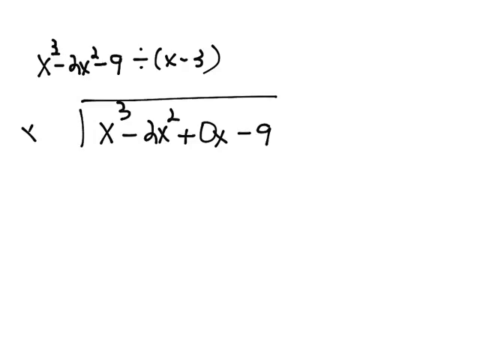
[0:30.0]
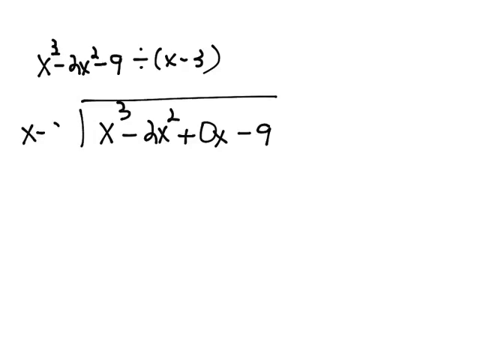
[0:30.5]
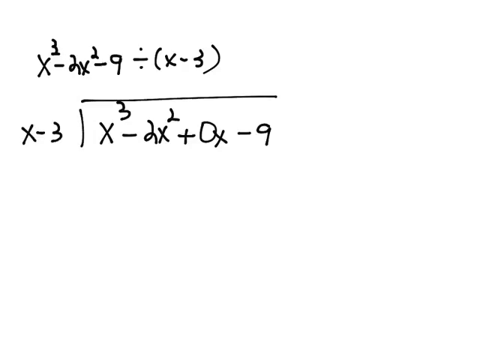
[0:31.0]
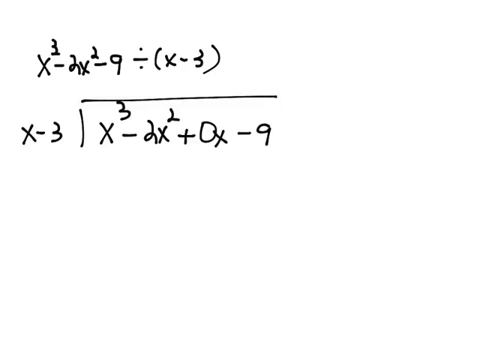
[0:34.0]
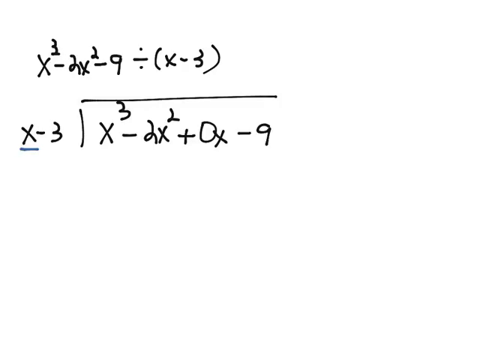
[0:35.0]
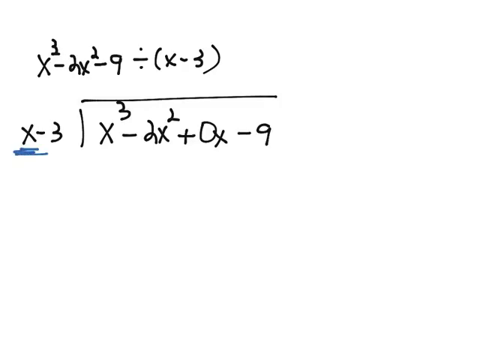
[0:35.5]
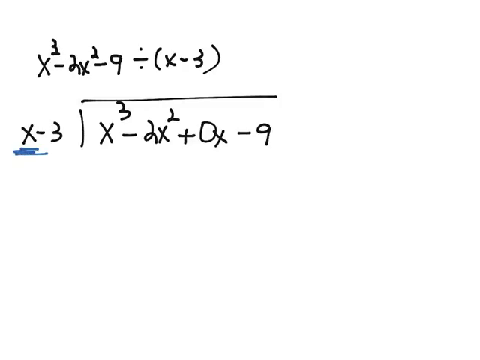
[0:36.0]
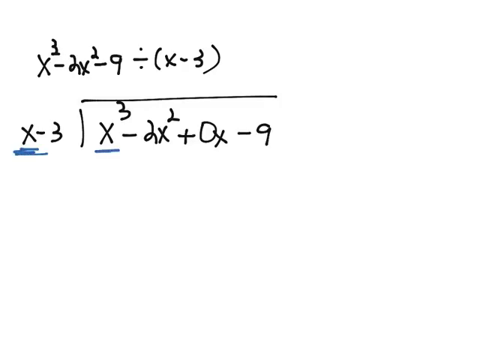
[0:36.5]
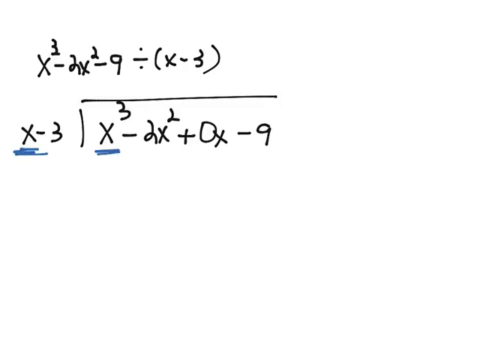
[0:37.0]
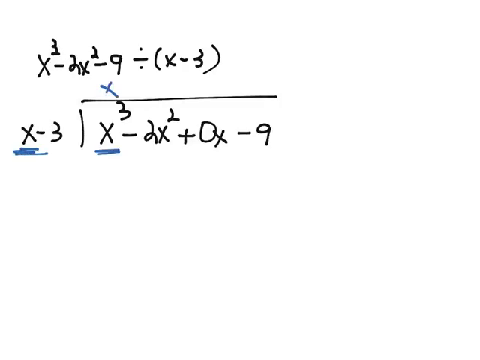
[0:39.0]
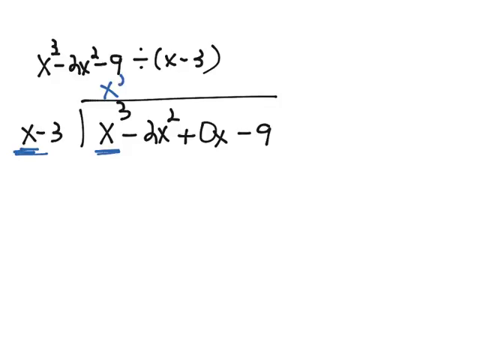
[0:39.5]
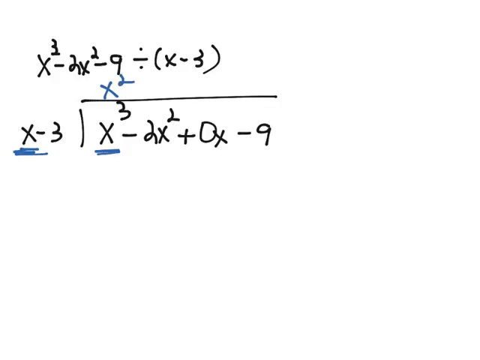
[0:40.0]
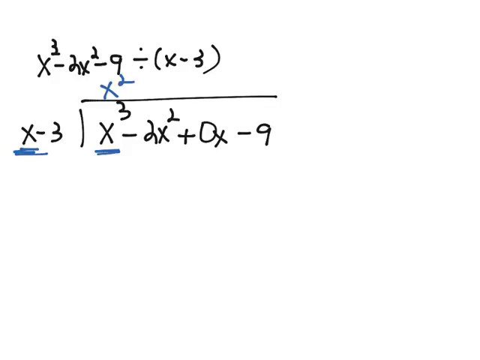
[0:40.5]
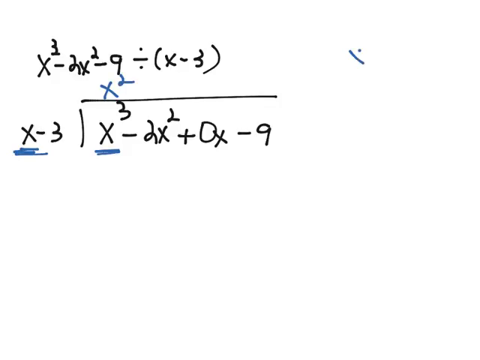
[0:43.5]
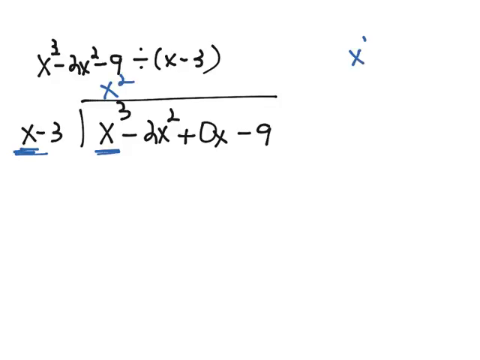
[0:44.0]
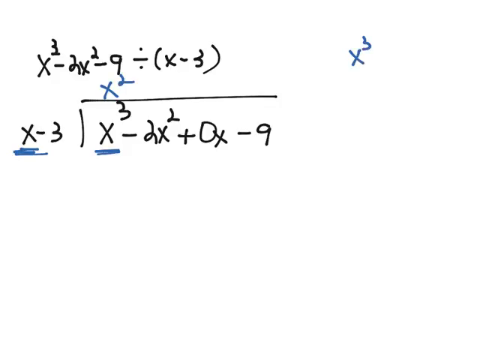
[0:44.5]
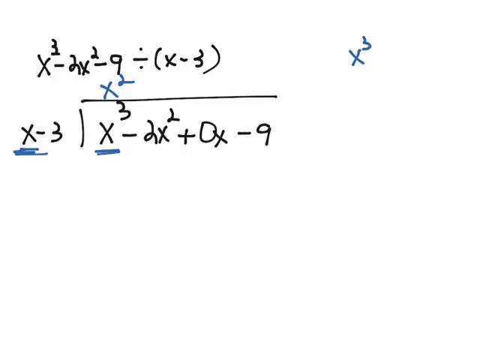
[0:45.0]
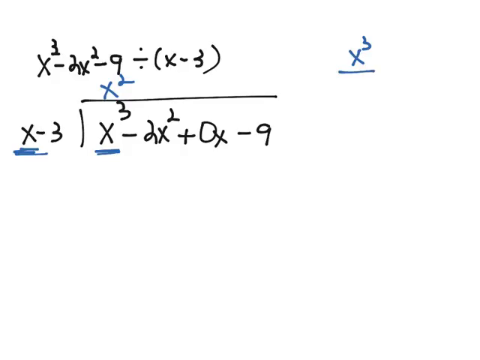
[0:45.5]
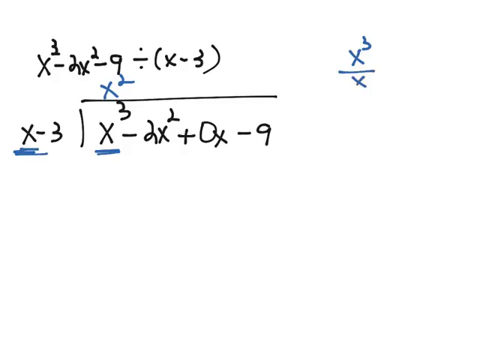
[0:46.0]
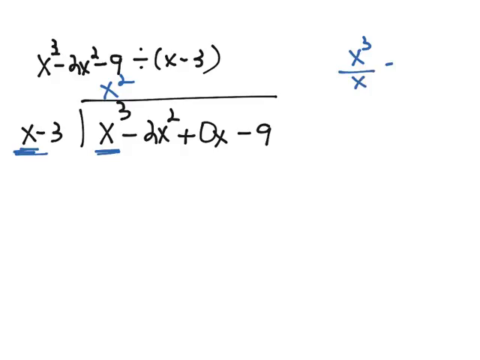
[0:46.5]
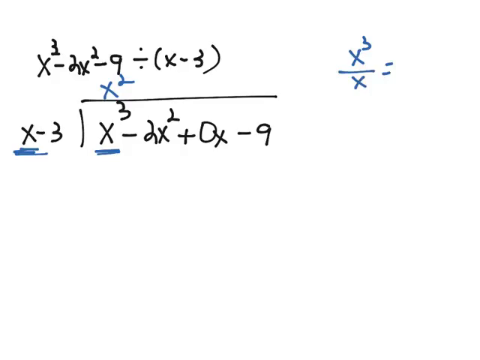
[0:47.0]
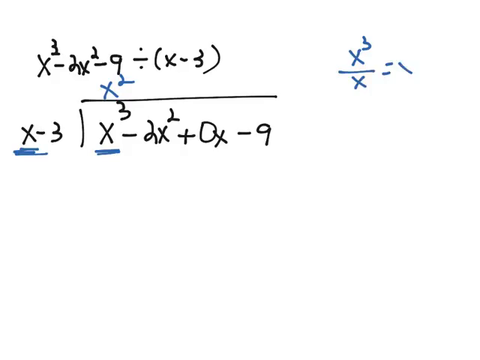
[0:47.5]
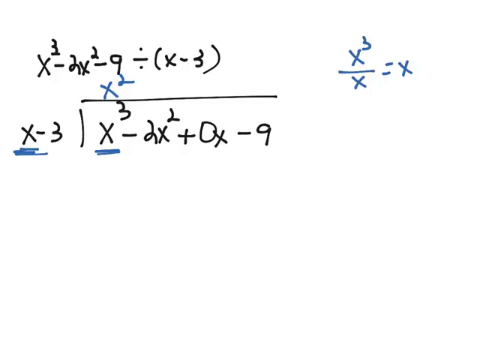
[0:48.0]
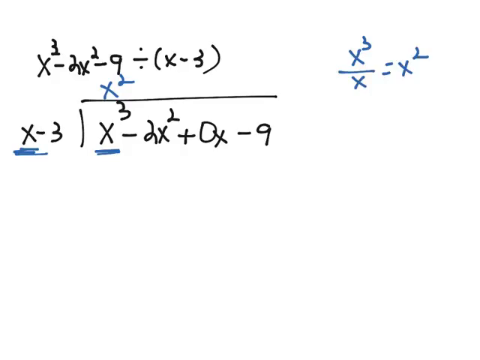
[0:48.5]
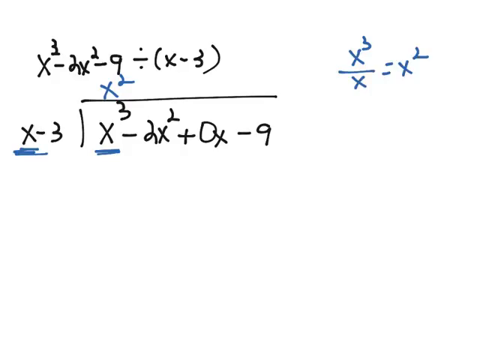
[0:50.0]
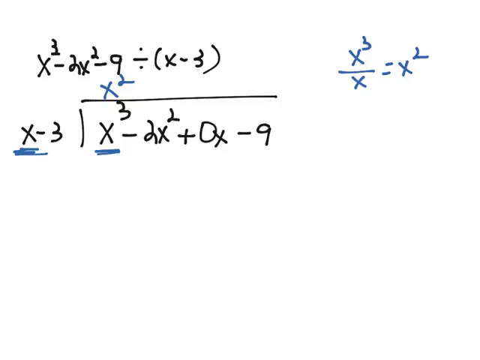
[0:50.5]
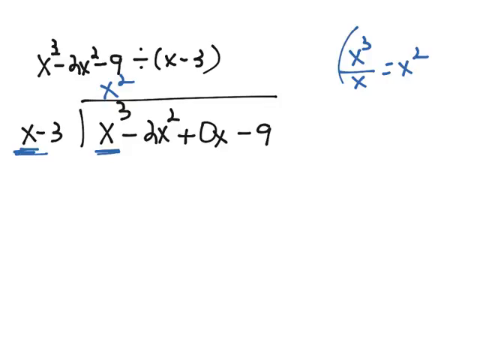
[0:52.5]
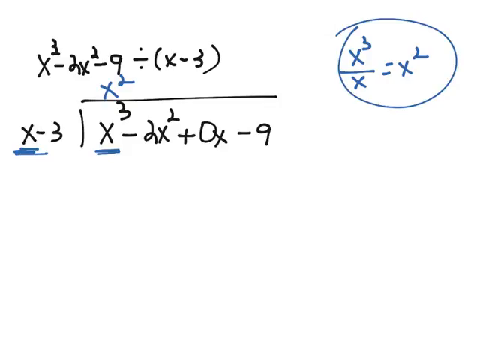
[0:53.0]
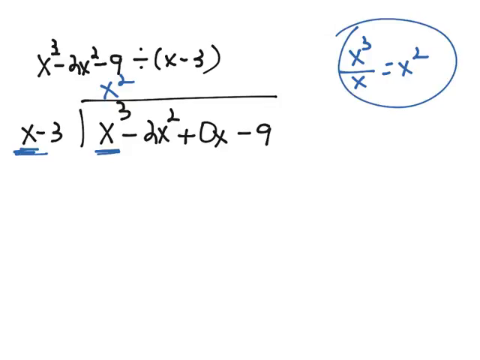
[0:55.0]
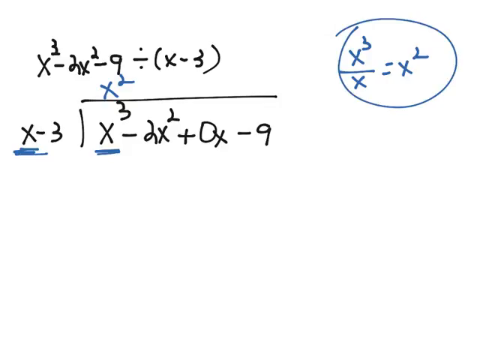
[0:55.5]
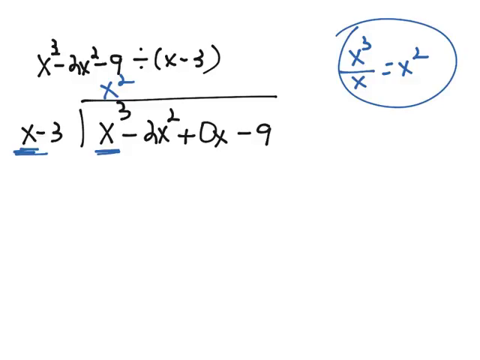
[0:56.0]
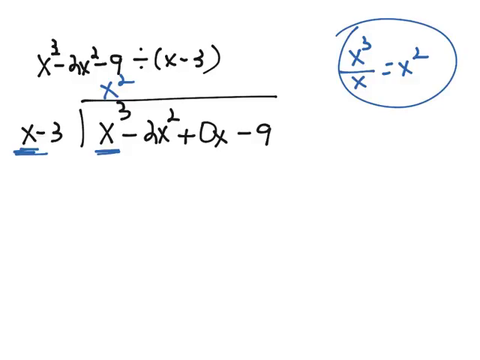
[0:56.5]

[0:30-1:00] The equation x³ − 2x² − 9 divided by (x − 3) is written at the top, and below it the equation now reads x³ − 2x² + 0x − 9 divided by x − 3. A blue line is squiggled under the x in x − 3, and another blue line is squiggled under the x of x³ inside the division. A blue x² is written above the line above x³. In the upper right portion of the screen, x³ ÷ x = x² is written, and a blue line then circles it.